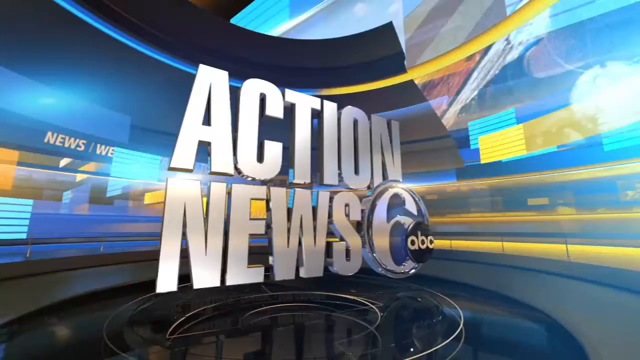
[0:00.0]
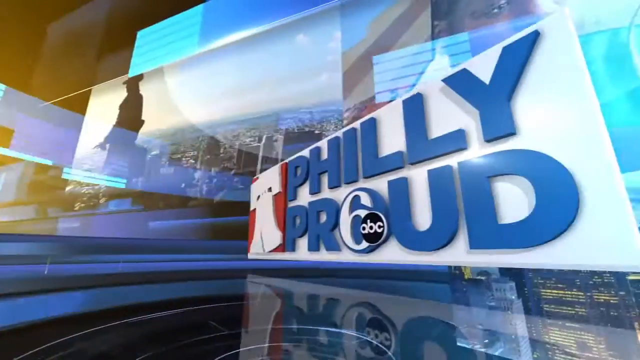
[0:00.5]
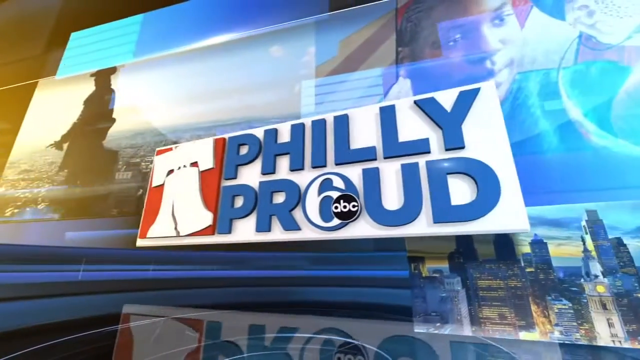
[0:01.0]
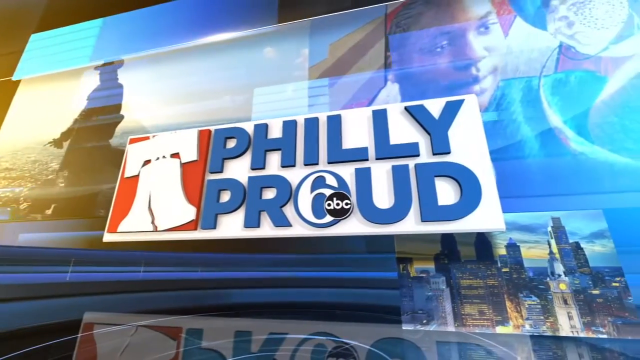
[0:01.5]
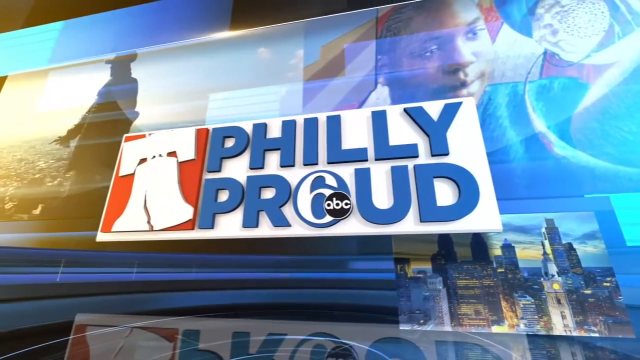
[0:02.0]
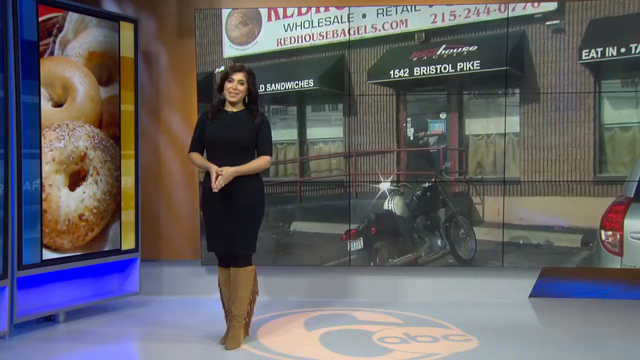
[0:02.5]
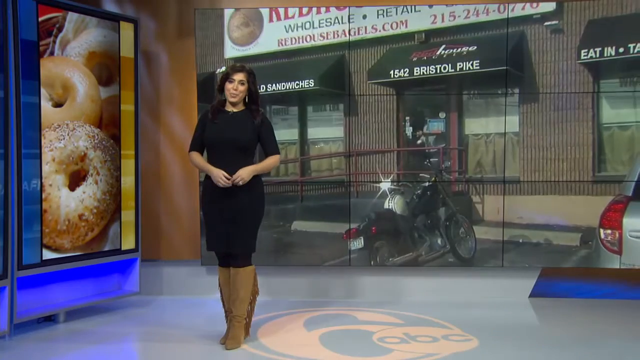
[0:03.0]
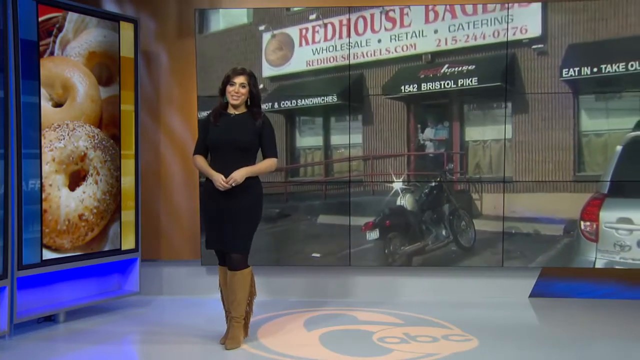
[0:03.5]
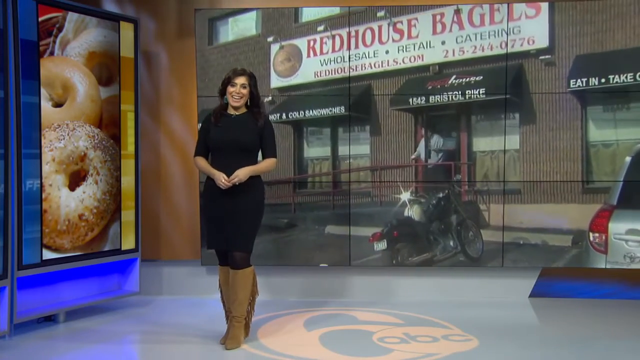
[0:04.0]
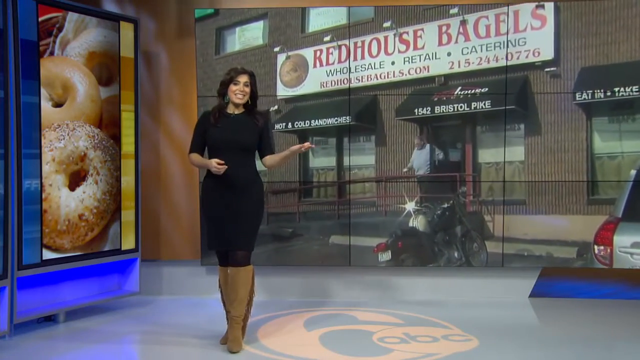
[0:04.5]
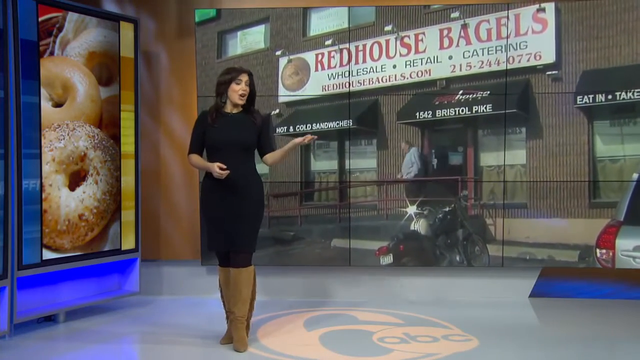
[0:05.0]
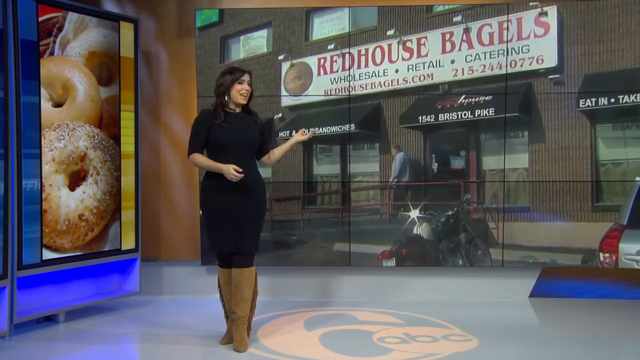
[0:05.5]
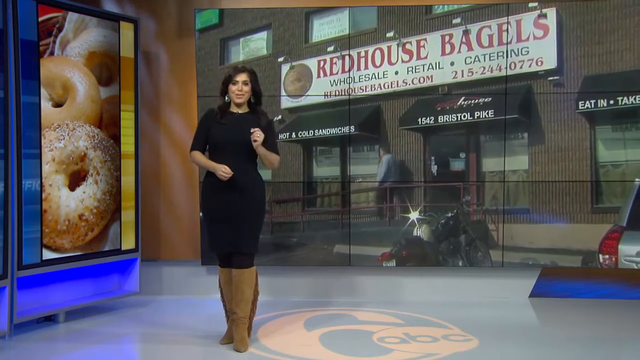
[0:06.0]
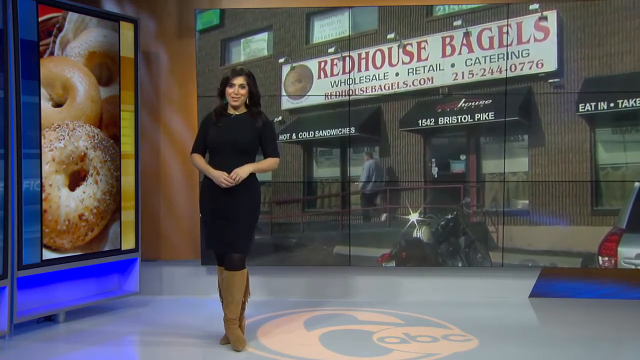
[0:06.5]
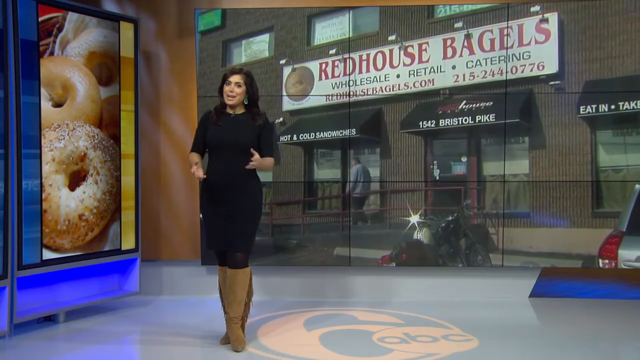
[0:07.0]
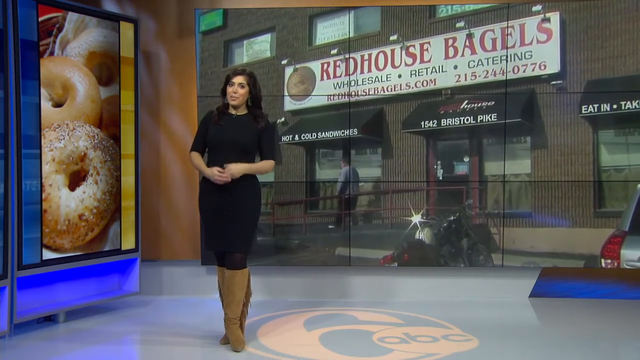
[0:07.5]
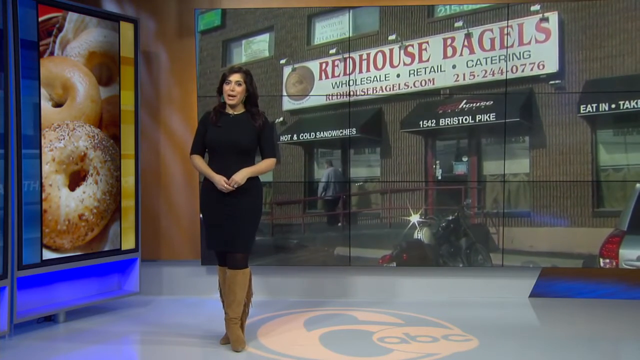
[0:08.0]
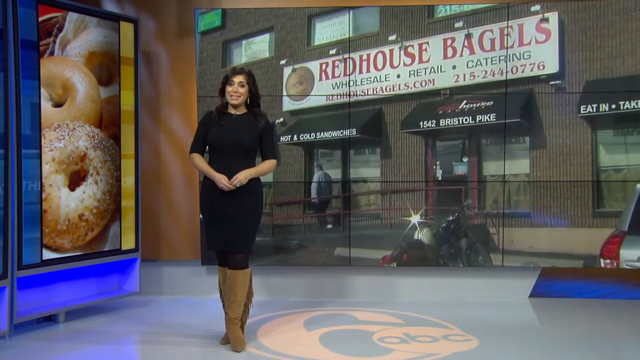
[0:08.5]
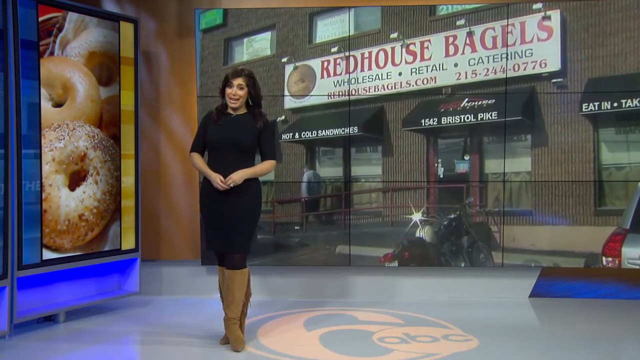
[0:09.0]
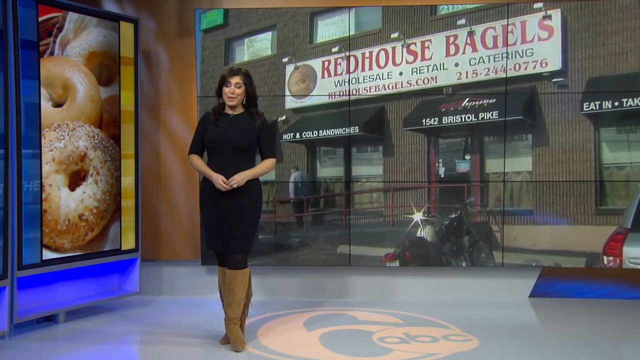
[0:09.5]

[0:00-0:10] The words "ACTION NEWS 6" appear in big letters, followed by the words "FEELING PROUD." A female newscaster in a black dress is standing up. She smiles and points to a video behind her that shows a business called Red House Bagels, making gestures with her hands. On her right side, the left side of the screen, there is a big picture, bigger than her, with bagels in it. She joins her hands together, then separates them again to gesture toward the video behind her.